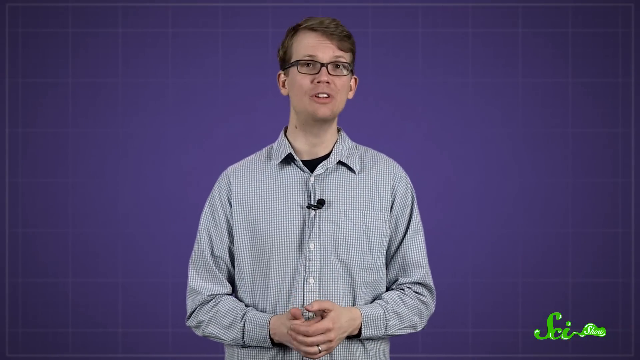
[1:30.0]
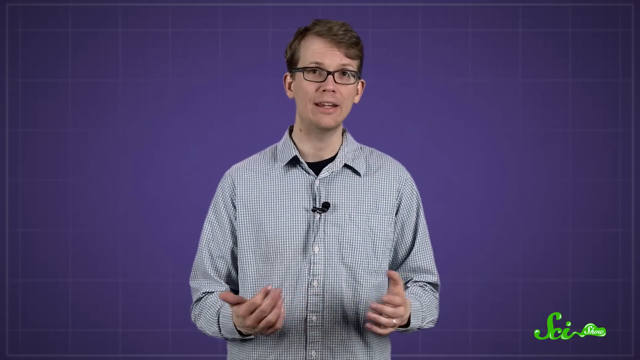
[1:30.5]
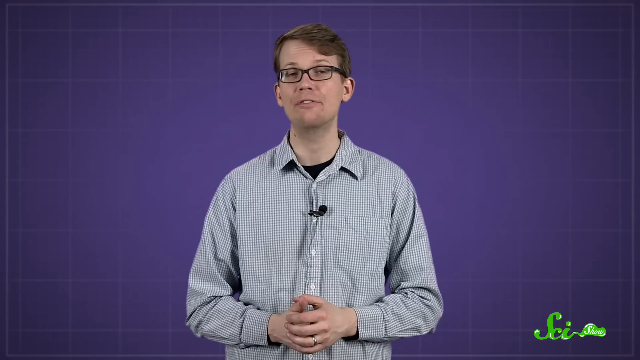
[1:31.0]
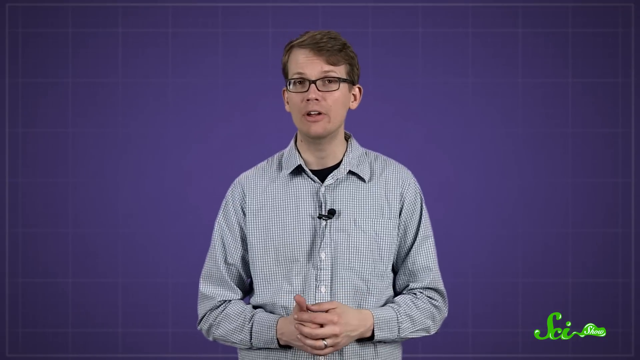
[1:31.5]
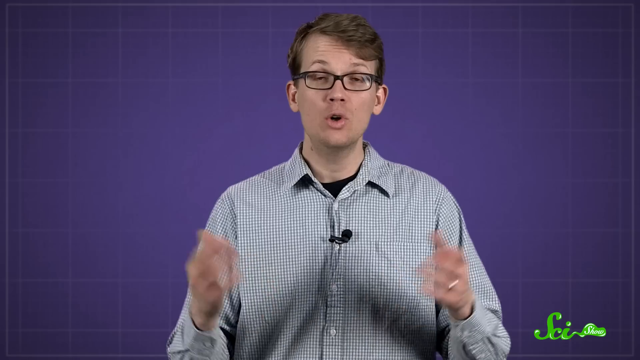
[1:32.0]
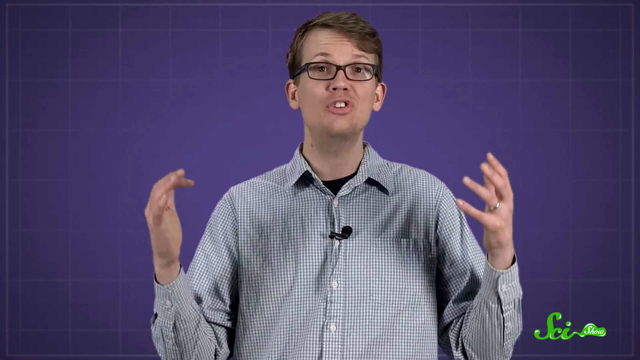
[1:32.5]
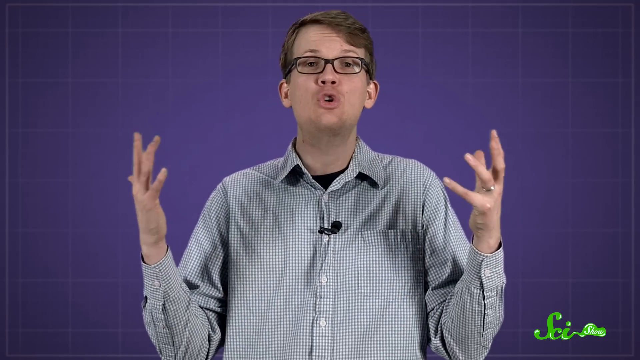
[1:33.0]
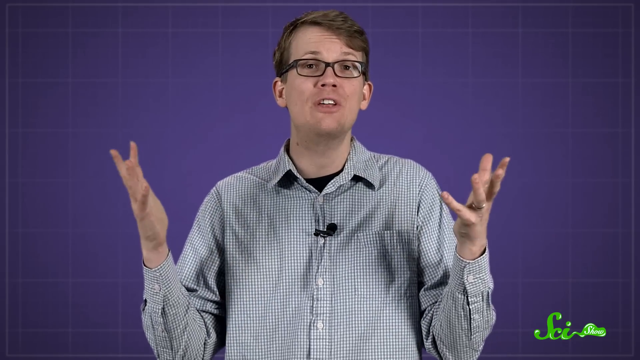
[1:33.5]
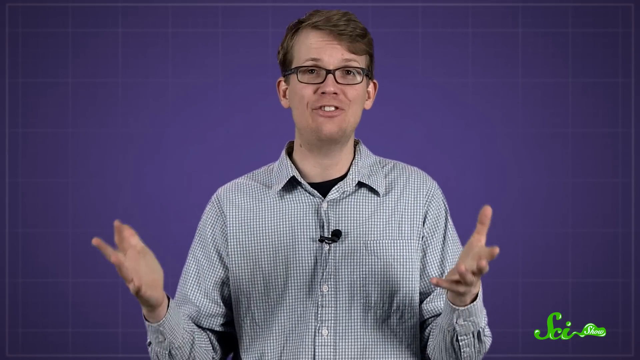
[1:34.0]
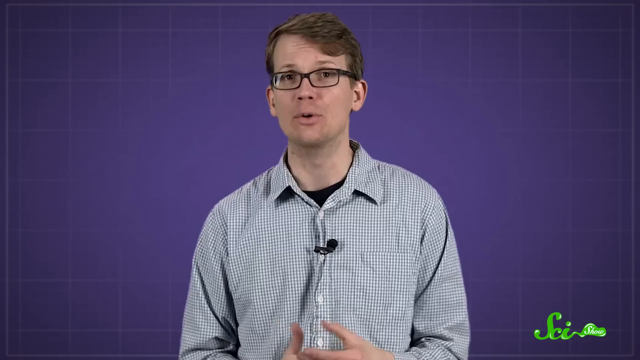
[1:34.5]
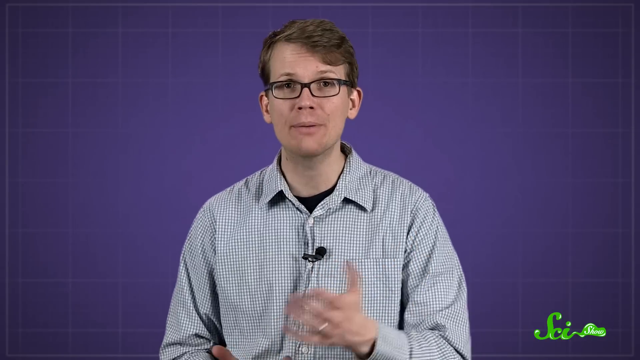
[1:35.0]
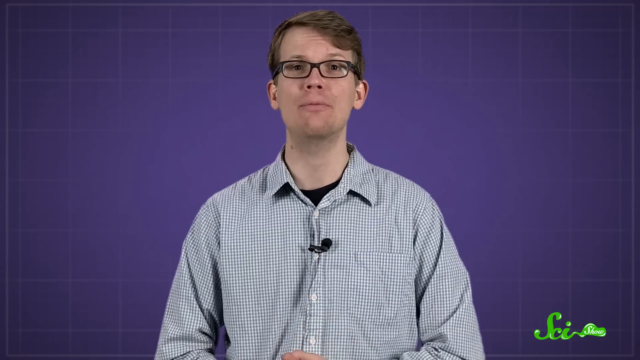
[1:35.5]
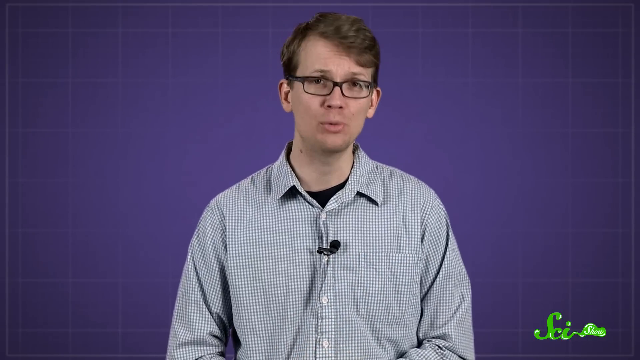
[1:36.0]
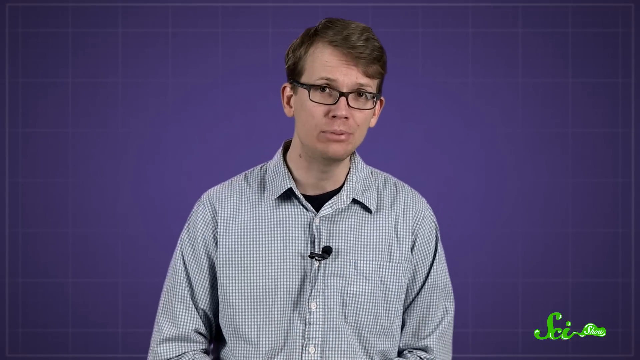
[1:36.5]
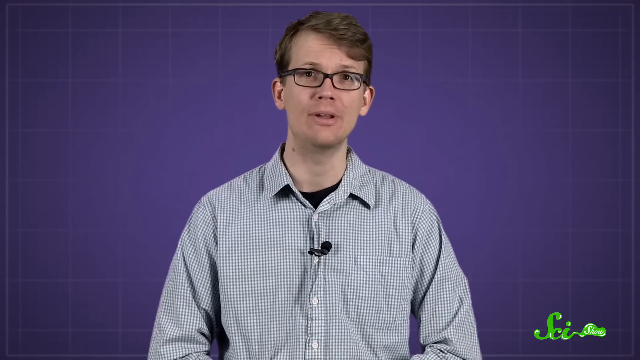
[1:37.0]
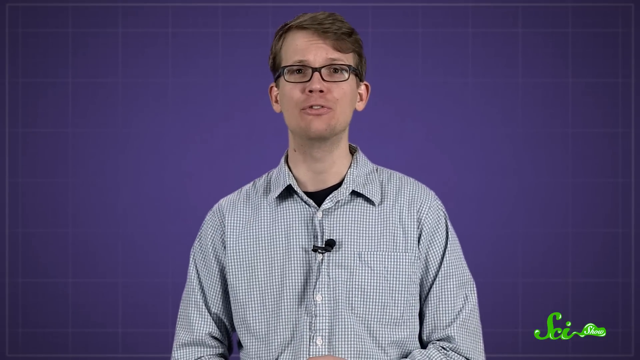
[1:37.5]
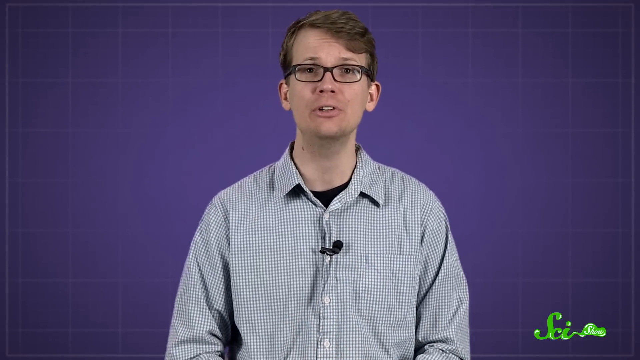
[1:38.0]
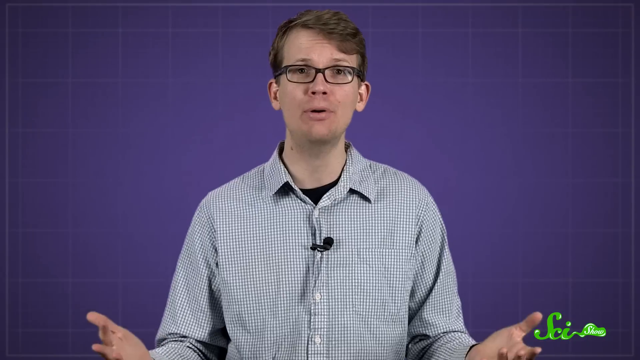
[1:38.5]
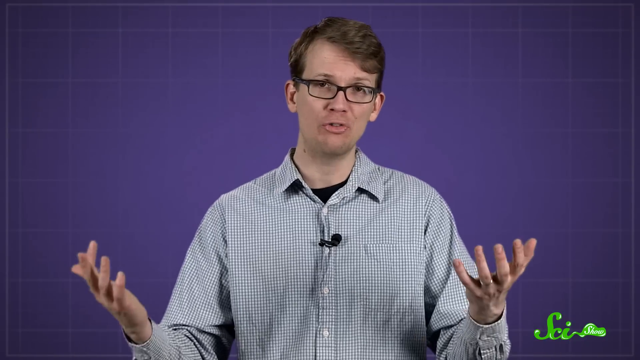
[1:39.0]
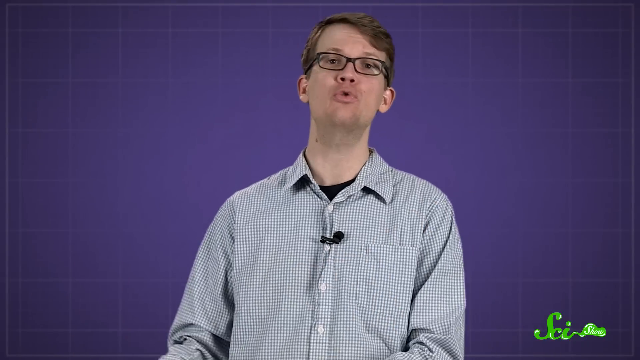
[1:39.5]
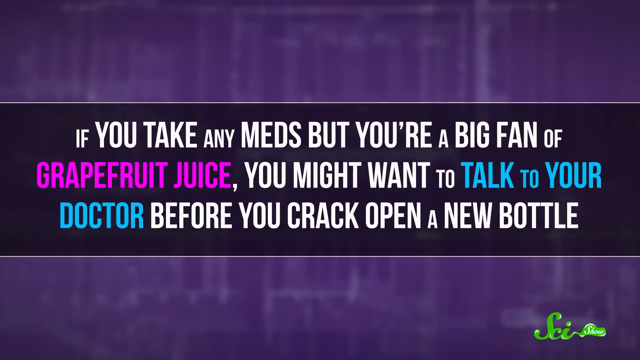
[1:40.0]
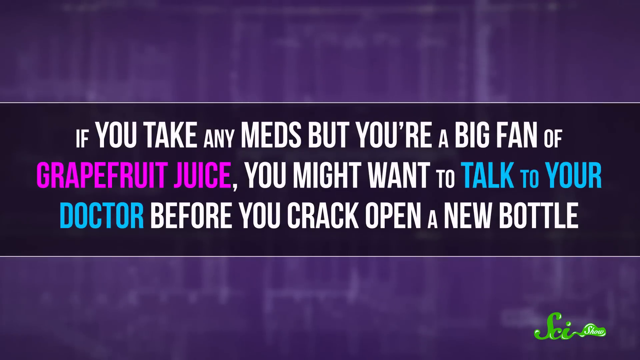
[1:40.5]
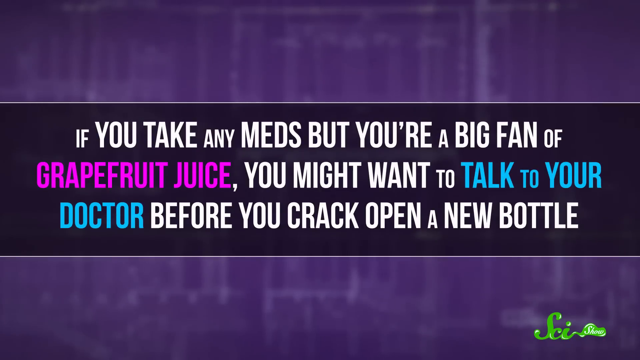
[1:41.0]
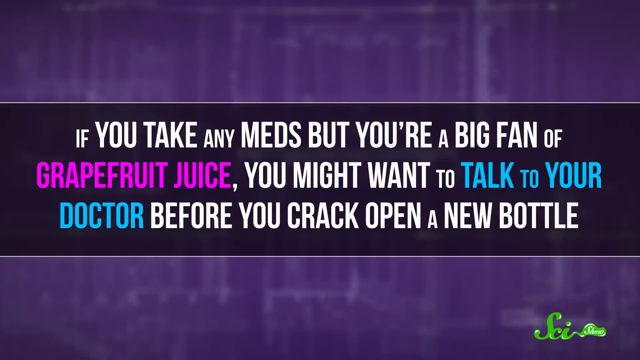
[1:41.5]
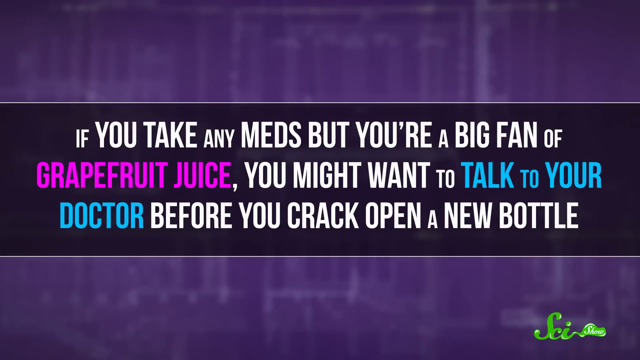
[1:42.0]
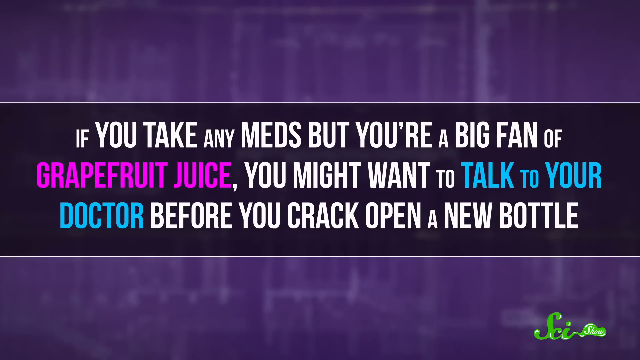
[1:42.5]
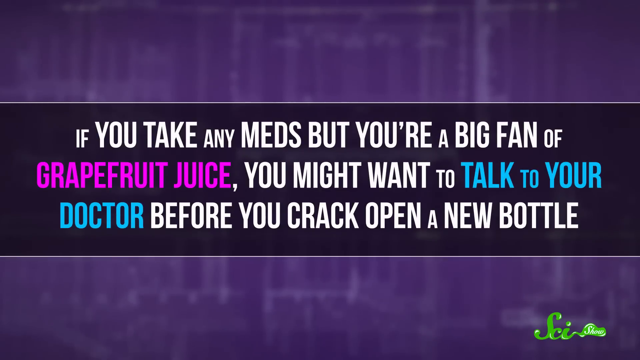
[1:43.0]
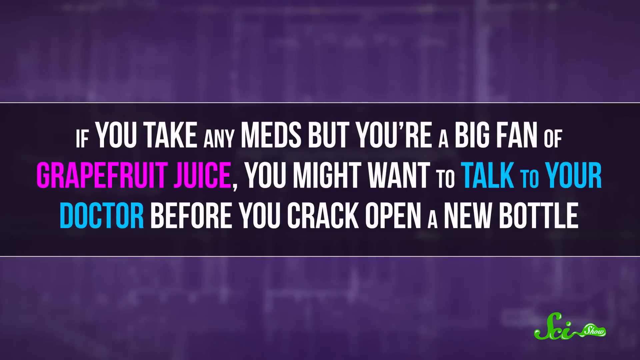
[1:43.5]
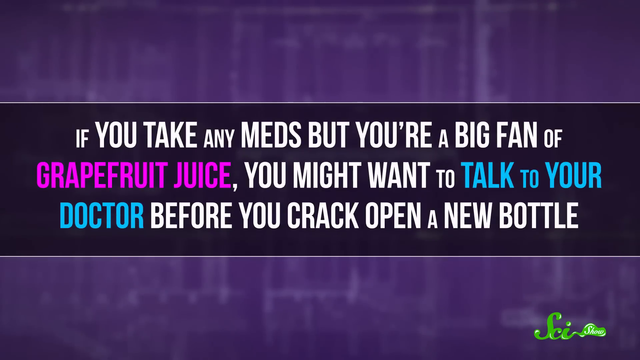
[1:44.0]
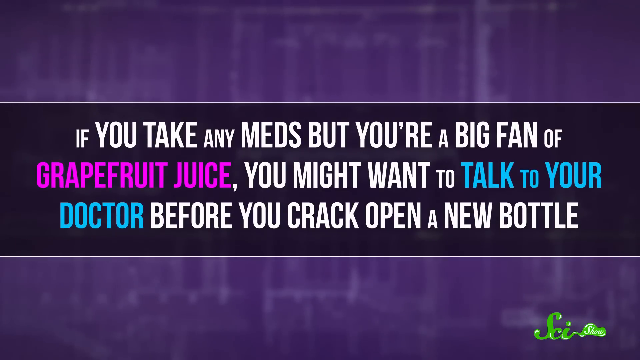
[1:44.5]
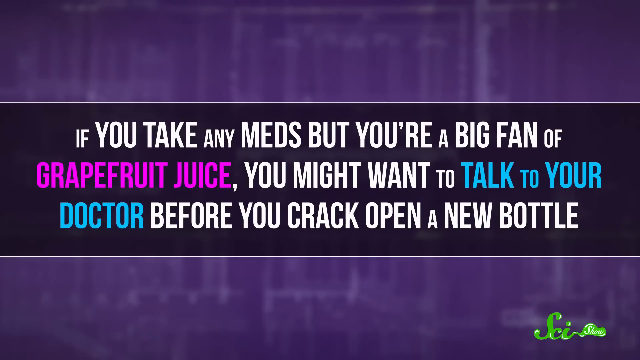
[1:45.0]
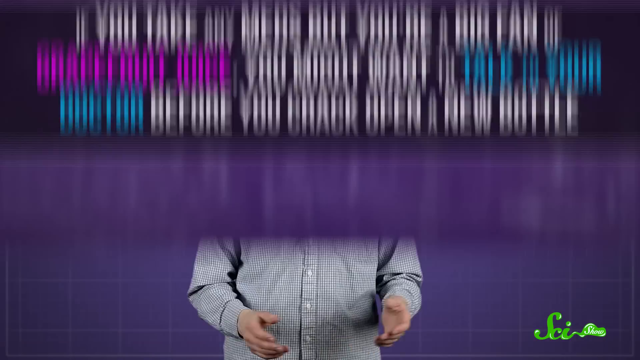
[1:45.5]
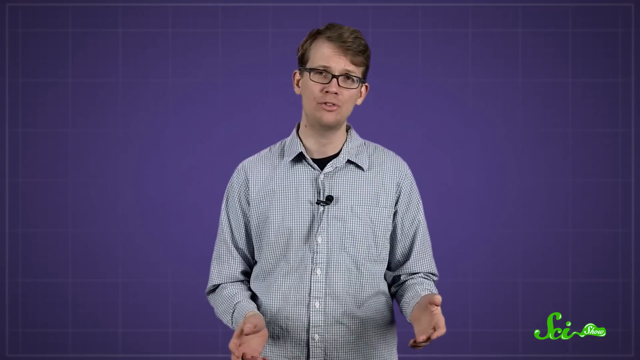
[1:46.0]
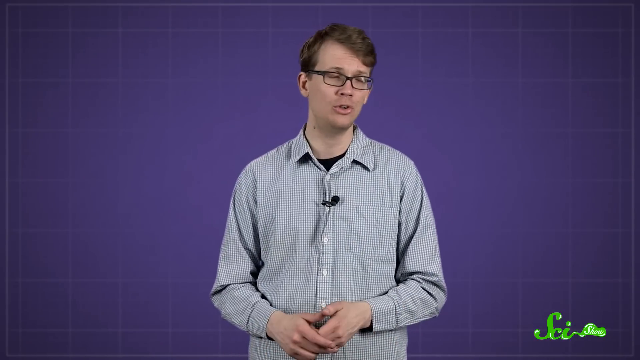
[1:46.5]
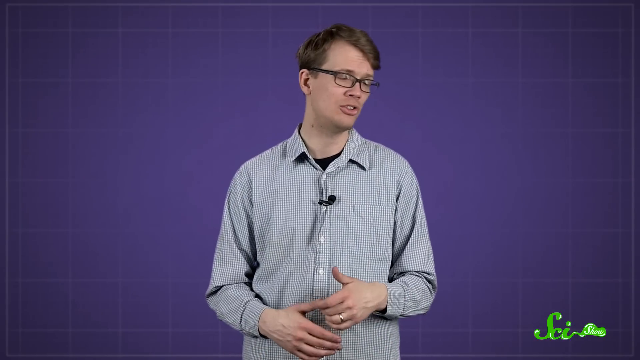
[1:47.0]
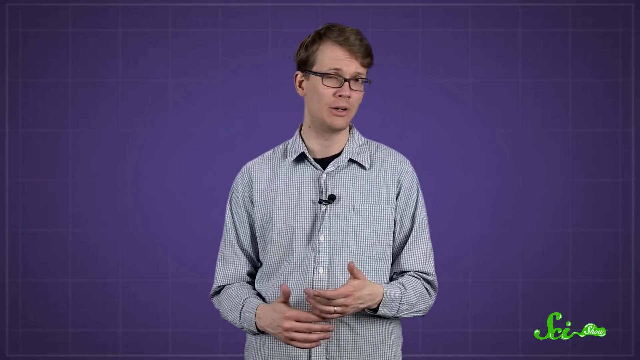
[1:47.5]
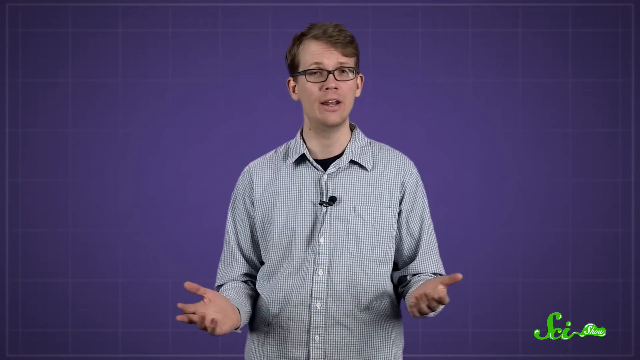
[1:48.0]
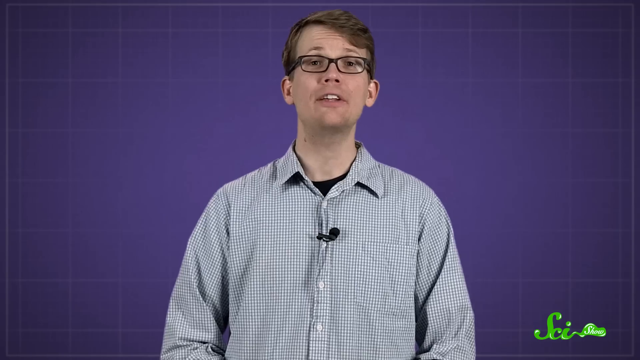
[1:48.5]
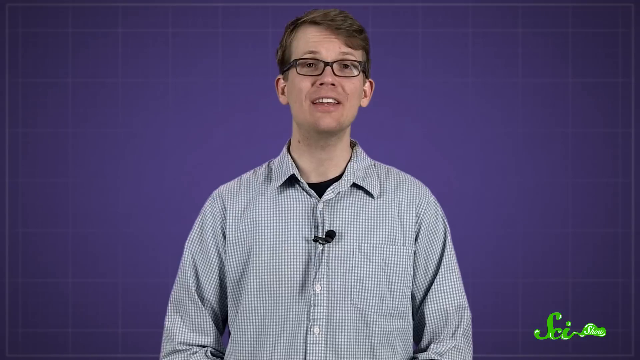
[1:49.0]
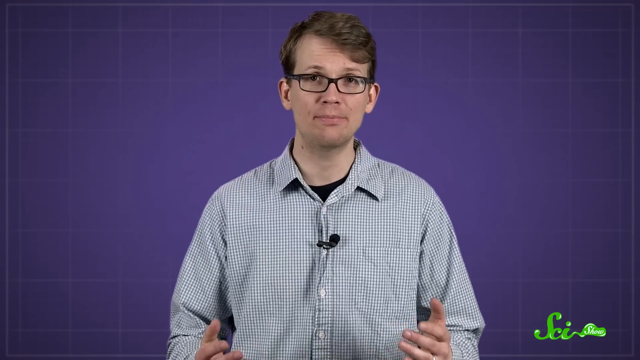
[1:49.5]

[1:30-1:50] The man faces the camera directly, talking and gesturing with his hands. A banner appears with white writing that says "if you take any meds but you're a big fan of", then "grapefruit juice" in purplish lettering, "you might want to", "talk to your doctor" in blue, and "before you crack open a new bottle". The video returns to the man, who continues talking with the background unchanged. He keeps his elbows at his sides with his arms at about 45-degree angles, moving only his hands up and down for emphasis rather than his whole arms.